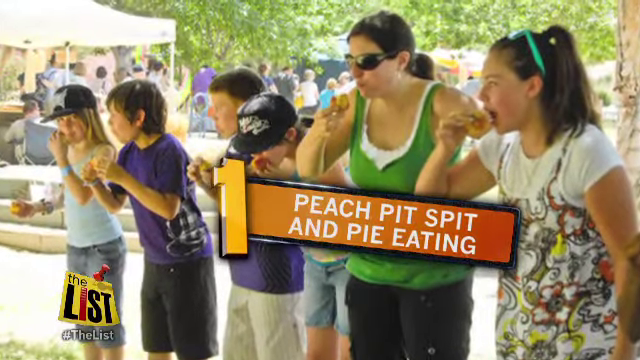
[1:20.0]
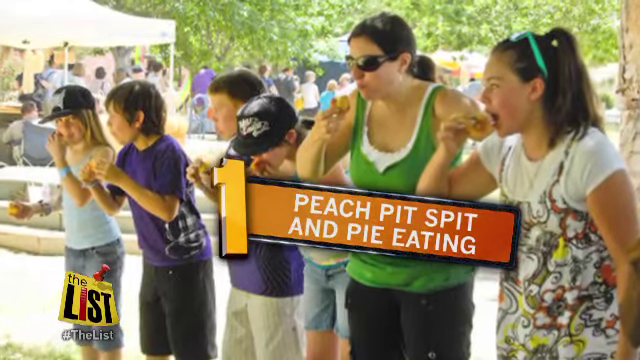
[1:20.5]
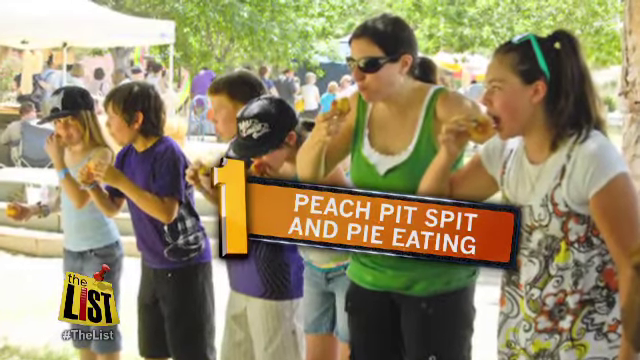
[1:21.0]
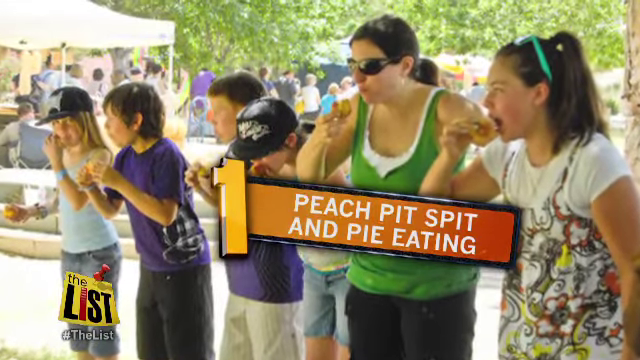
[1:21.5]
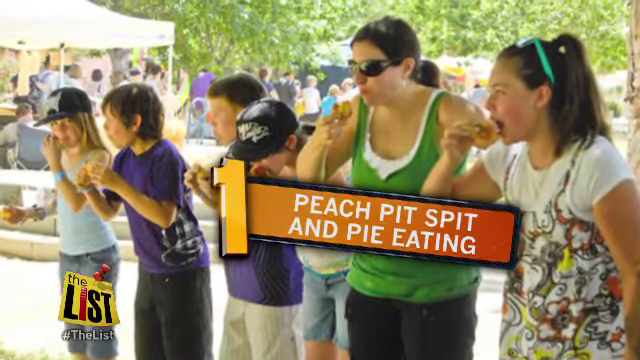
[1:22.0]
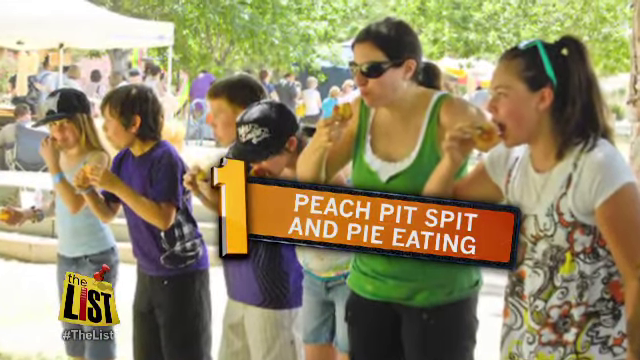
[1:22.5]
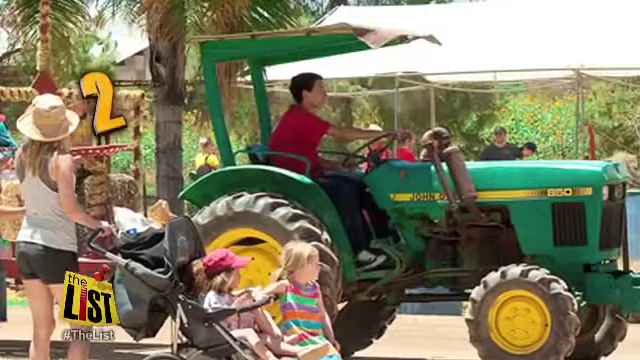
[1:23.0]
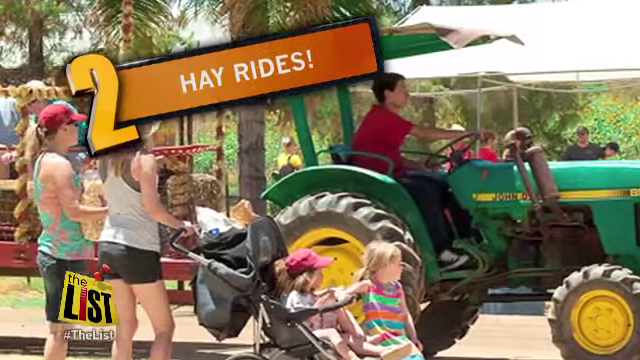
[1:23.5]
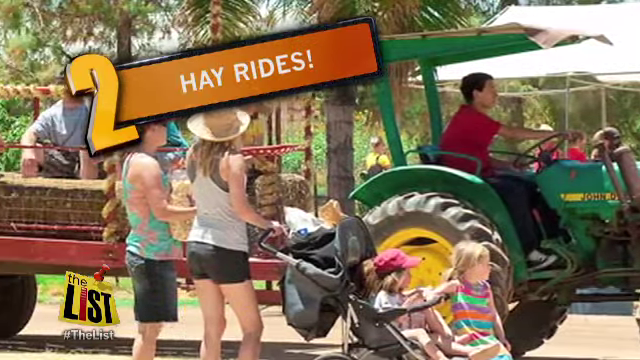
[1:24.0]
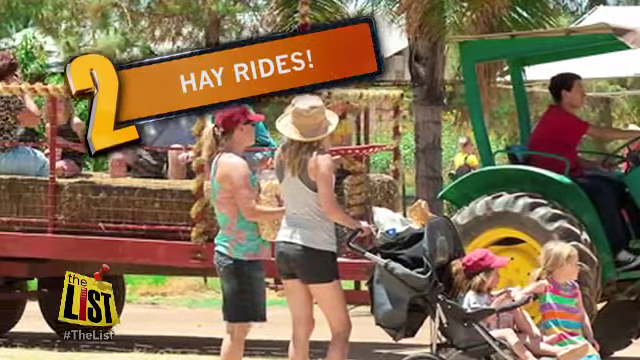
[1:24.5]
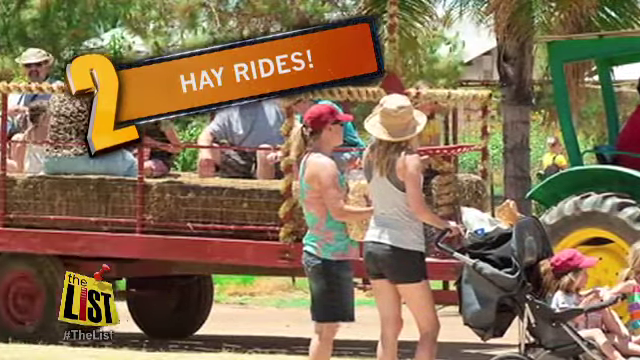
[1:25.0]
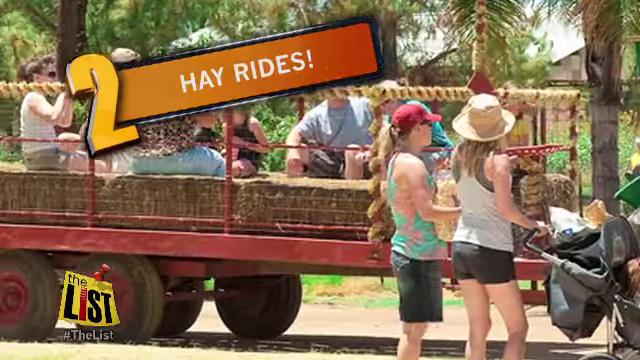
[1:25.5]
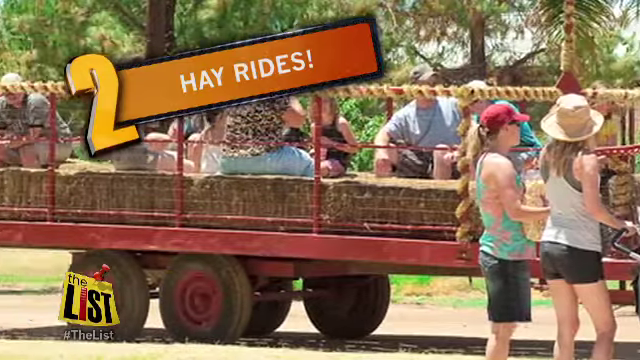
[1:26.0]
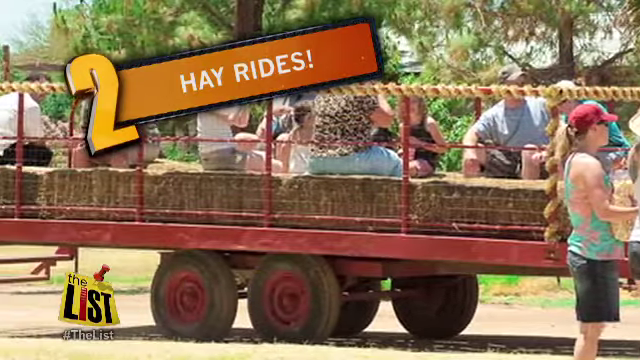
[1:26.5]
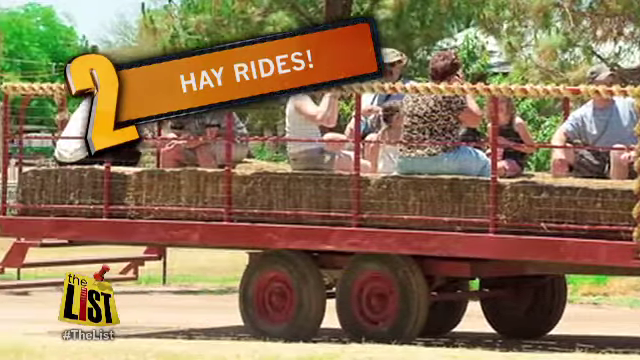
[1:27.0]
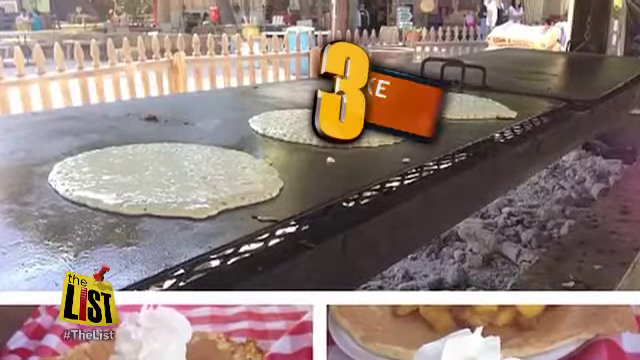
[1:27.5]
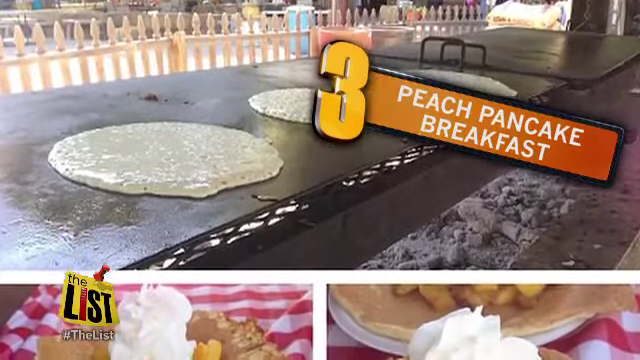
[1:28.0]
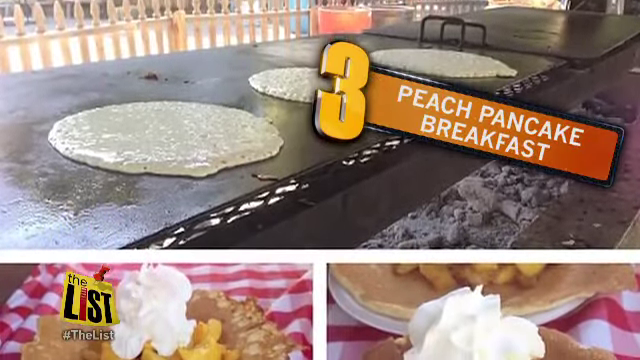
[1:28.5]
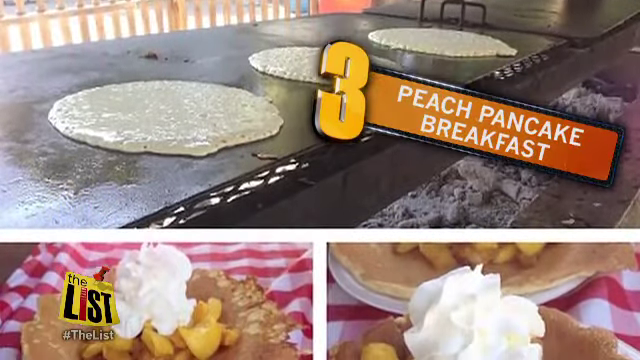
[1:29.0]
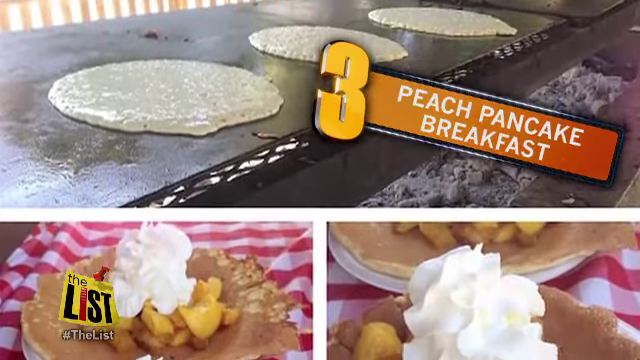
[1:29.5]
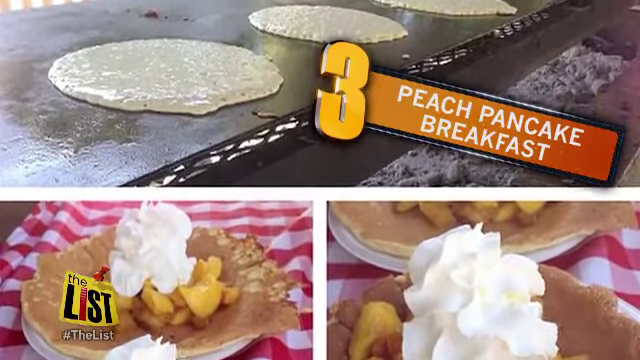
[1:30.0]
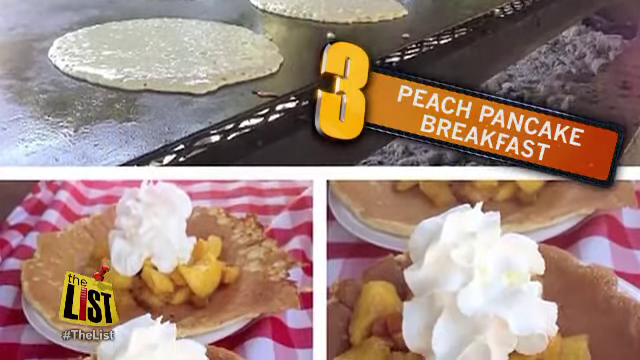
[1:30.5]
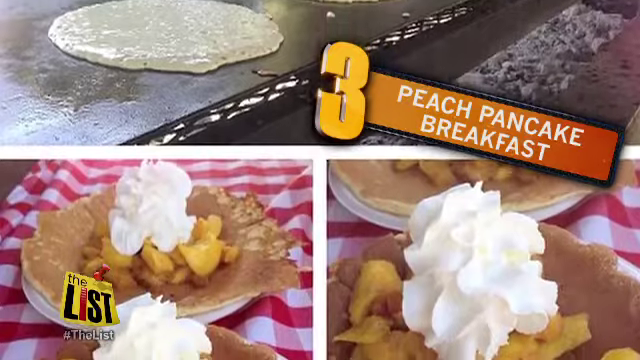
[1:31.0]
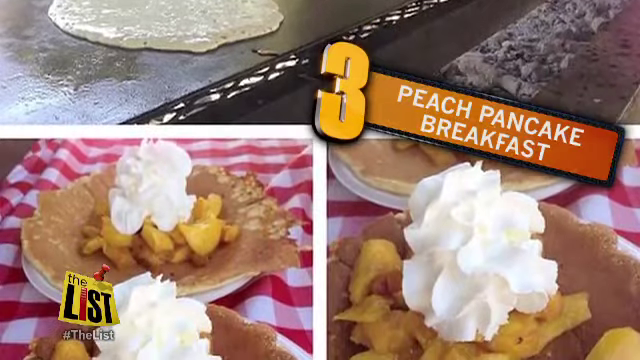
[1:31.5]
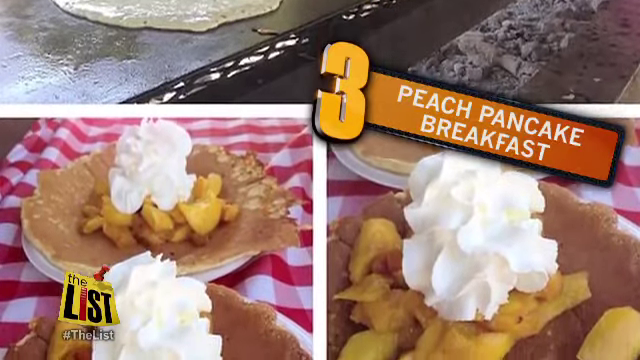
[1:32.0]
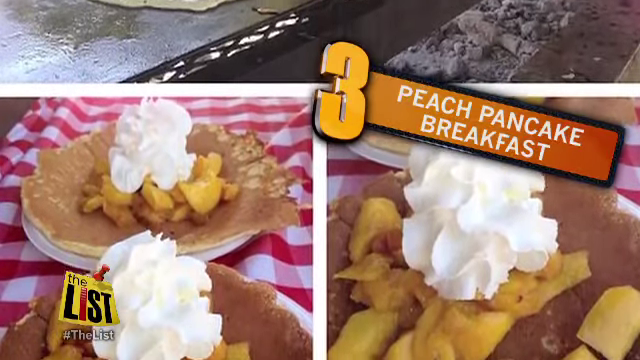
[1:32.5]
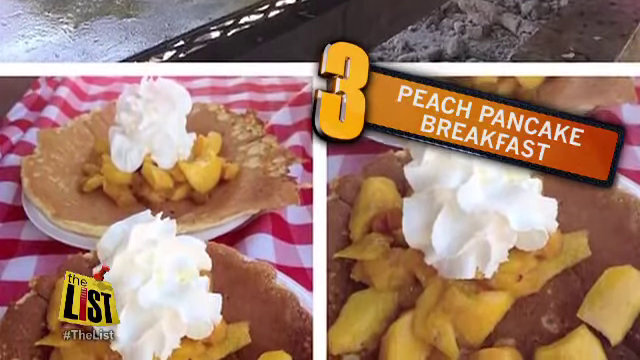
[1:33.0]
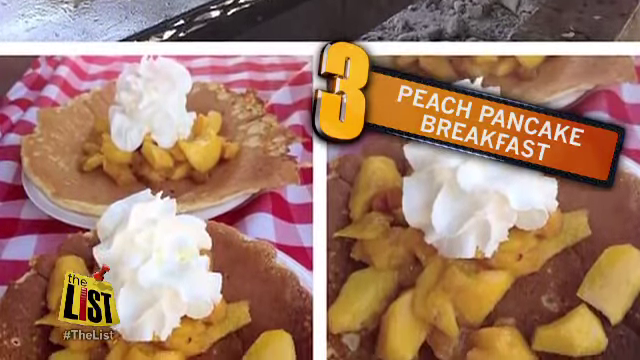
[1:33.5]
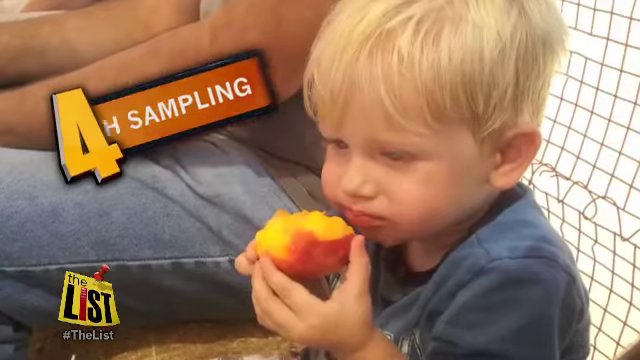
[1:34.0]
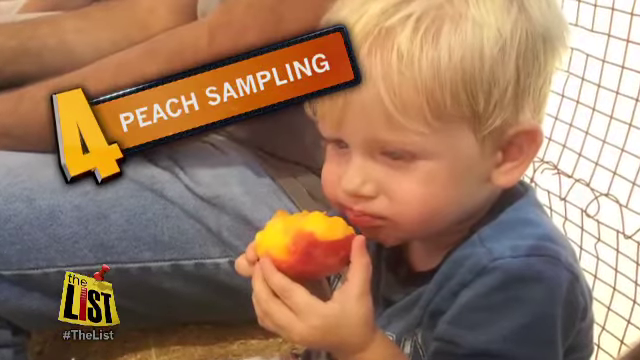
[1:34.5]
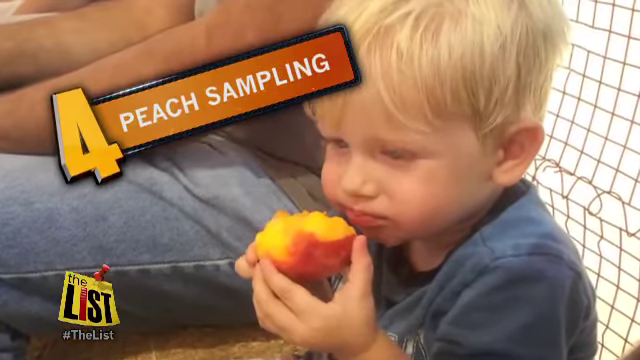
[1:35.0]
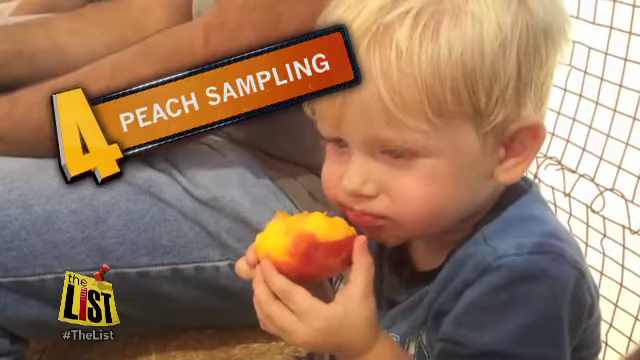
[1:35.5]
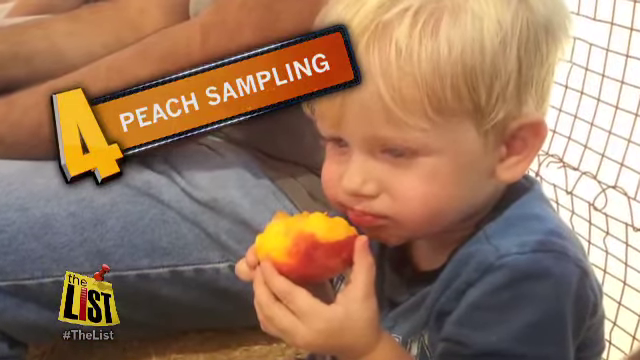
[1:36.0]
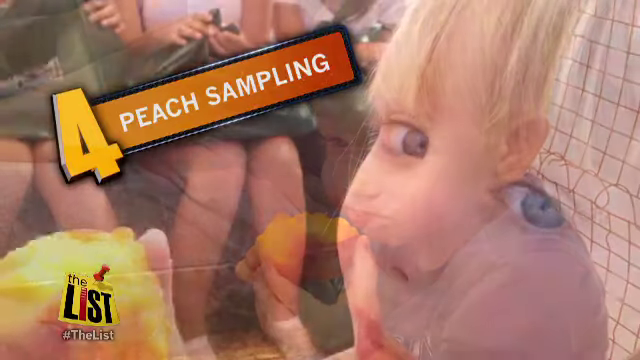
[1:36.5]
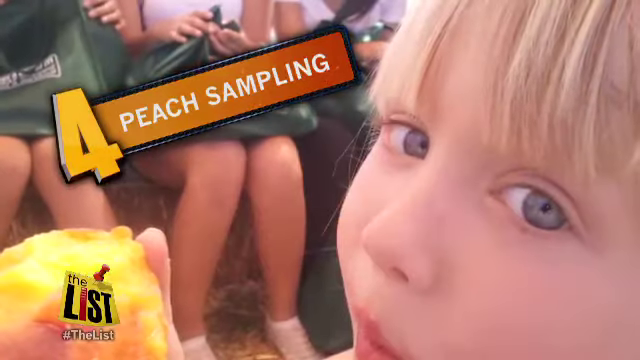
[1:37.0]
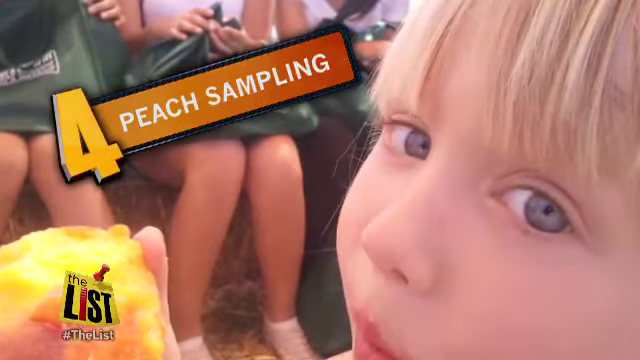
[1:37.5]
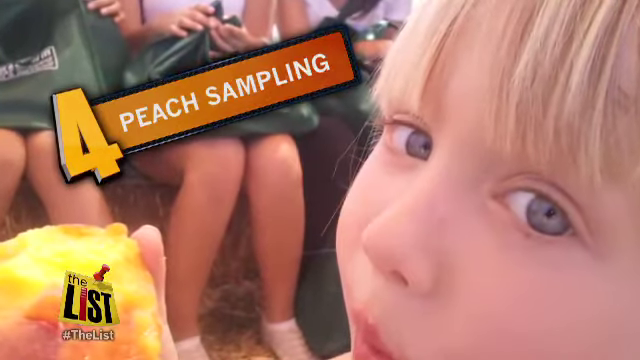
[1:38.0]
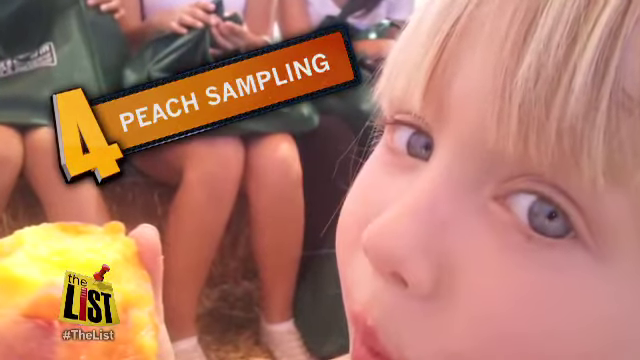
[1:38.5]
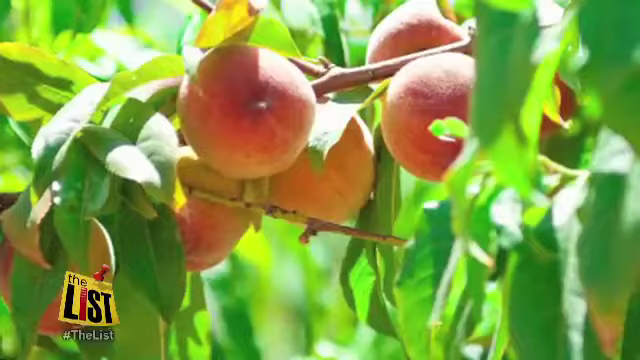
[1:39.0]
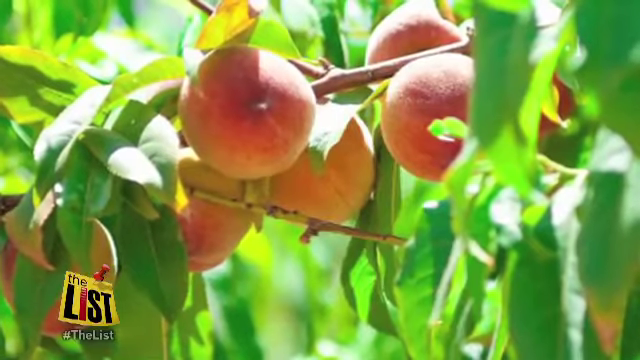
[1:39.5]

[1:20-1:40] The news story is apparently titled The List, according to the logo in the lower left corner: a yellow rectangle with black and red letters and a red pushpin on top. An outdoor event is shown, with many people in the background and a line of six children and one adult woman running from left to right. In front of them is an orange banner with white text reading "peach pit spit and pie eating," with the numeral 1 in yellow on the left of the banner. Everyone holds a peach and is trying to eat it. The scene then changes to the same event, where a trailer is being pulled with people sitting on it getting a ride. The tires are visible at the bottom, along with what might be bales of hay or brown wooden seats on which people are seated. Text says "hay rides." Next, the number three pops up on the screen with "peach pancake breakfast" on a banner in white text, and images show different pancakes loaded with sliced peaches and whipped topping. The number four then pops up on the screen, reading "peach sampling," with a young boy eating a peach.